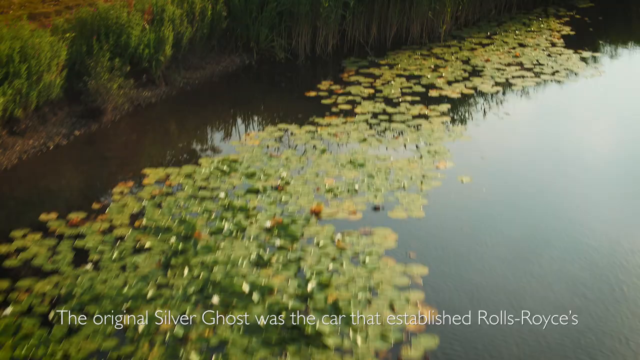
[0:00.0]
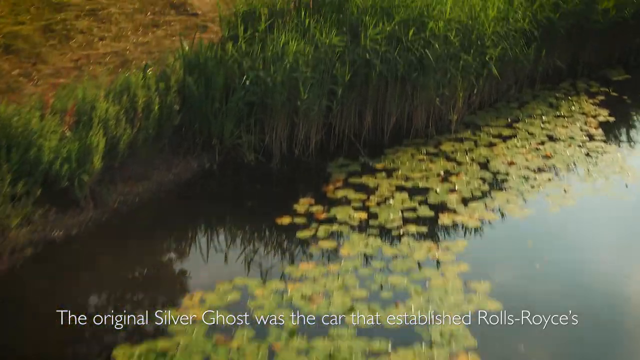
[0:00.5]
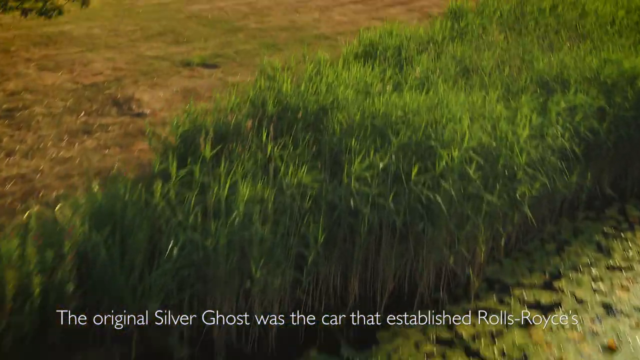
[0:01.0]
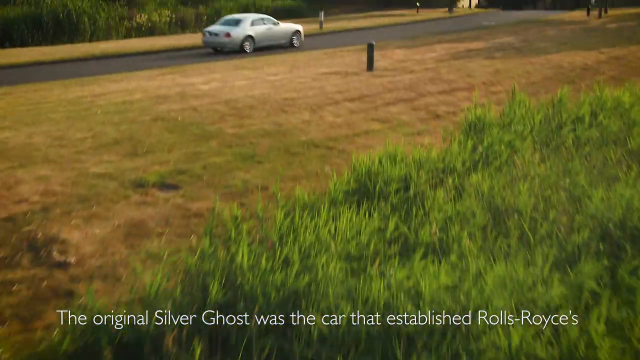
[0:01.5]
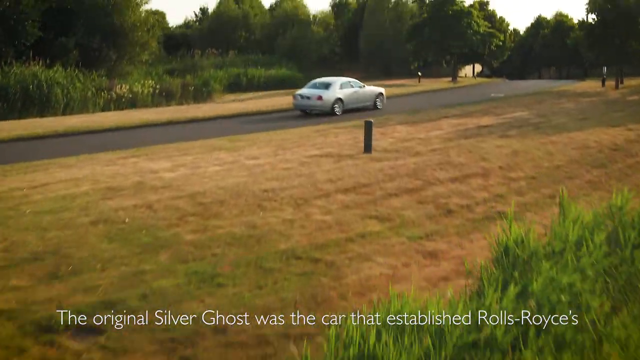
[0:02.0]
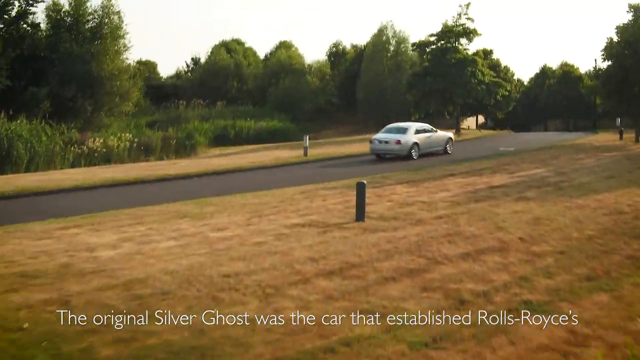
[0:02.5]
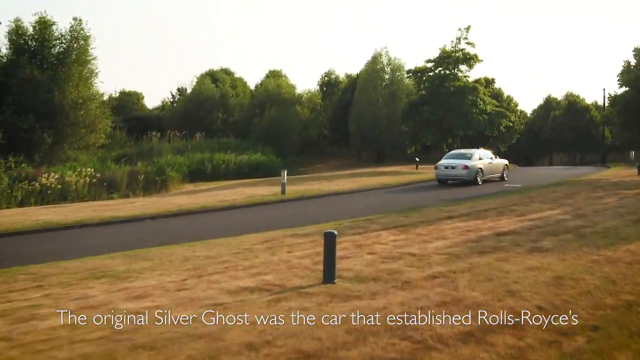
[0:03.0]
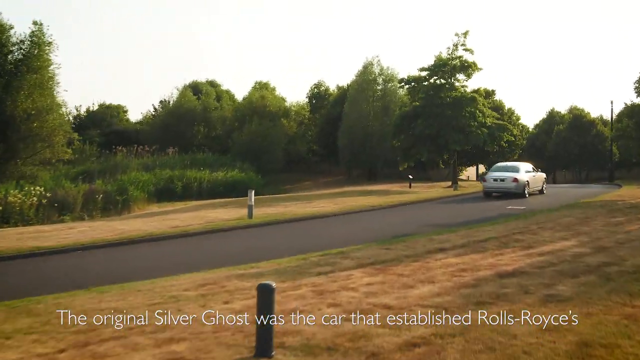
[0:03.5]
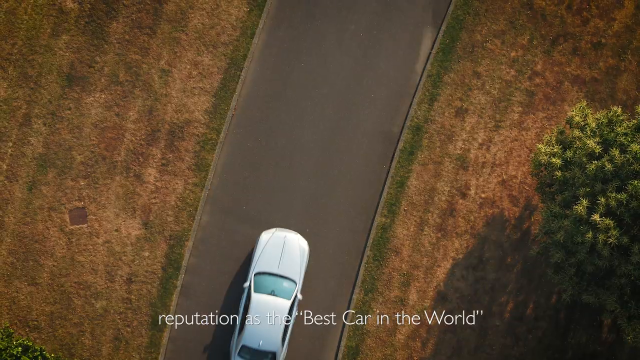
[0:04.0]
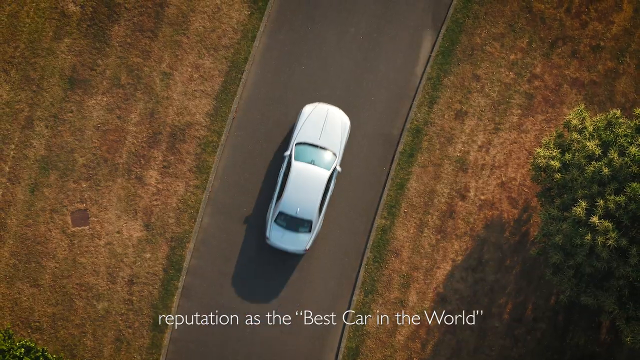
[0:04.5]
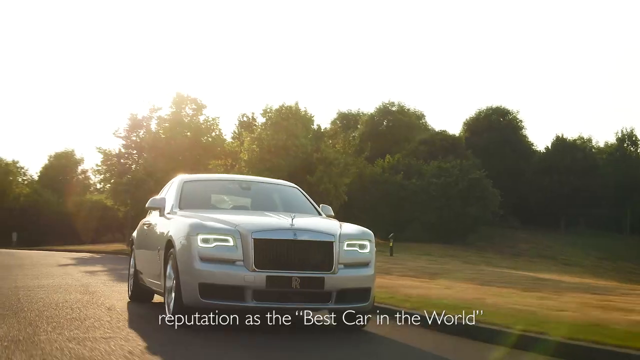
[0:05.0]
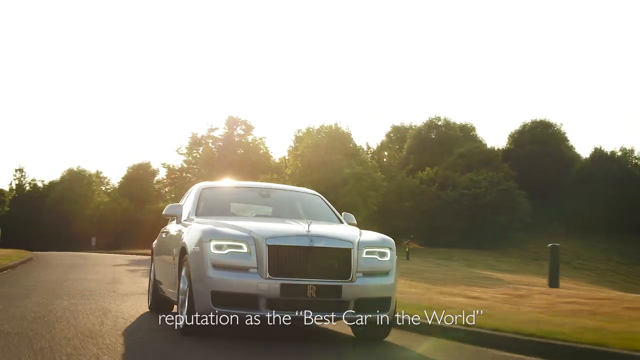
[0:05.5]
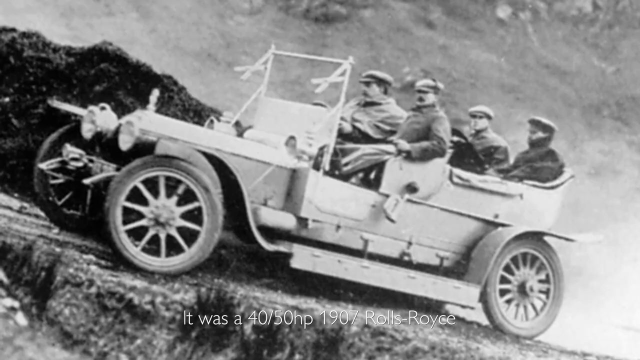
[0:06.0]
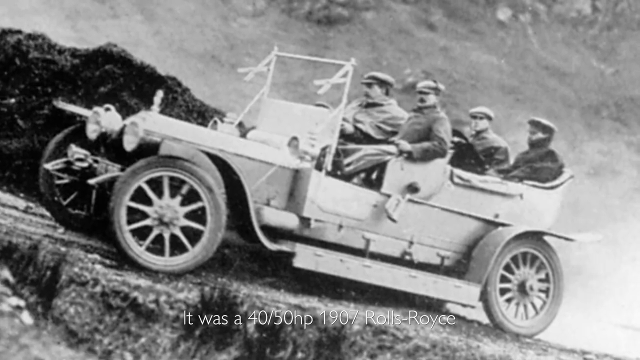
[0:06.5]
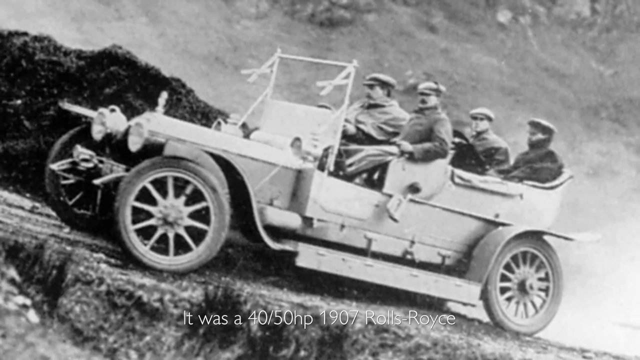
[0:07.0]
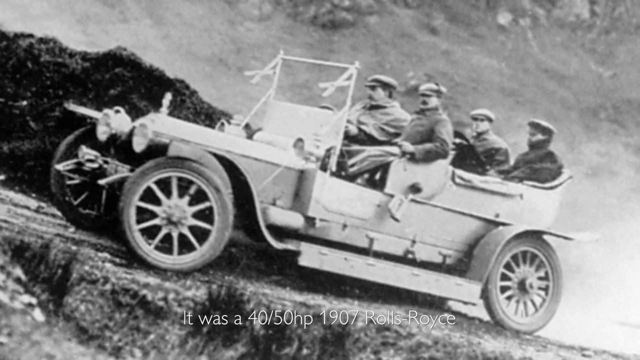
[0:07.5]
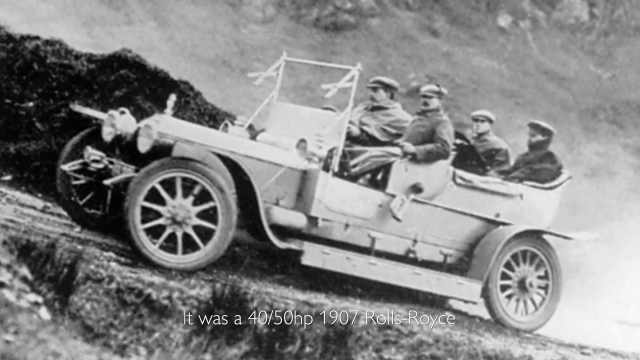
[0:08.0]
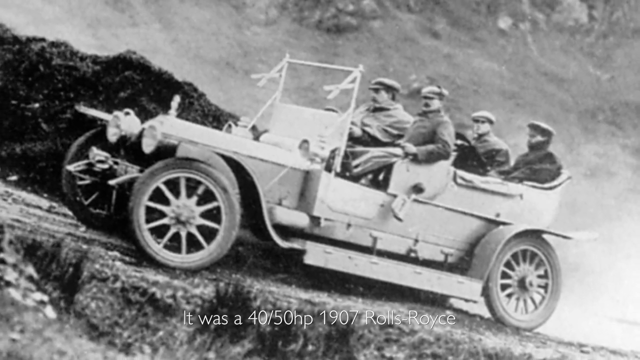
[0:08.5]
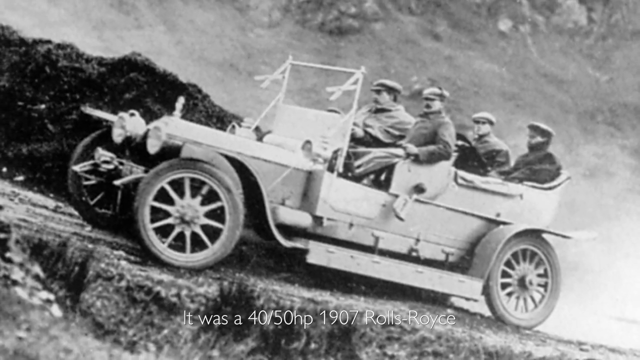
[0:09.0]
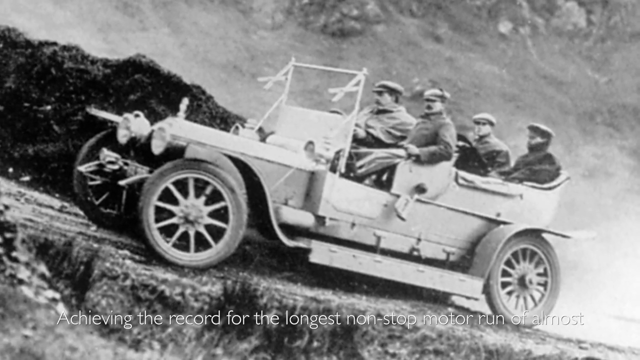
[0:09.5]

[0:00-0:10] On-screen text reads "the original Silver Ghost was the car that established reputation as the best car in the world." A car drives down a road in the middle of the country, and then another car appears. A black and white video shows a very old car with four men in it. The view returns to the original car driving on a road in what looks like a very nice area; no buildings are visible, just the car on the road. It quickly changes to the other car. The original car has four tires and four men in caps, wearing big jackets of the kind worn in the early 1900s. They go up a hill, seemingly creating dust and dirt behind the car. The wheels are all dusty, and behind them is nothing but a dirt hill.